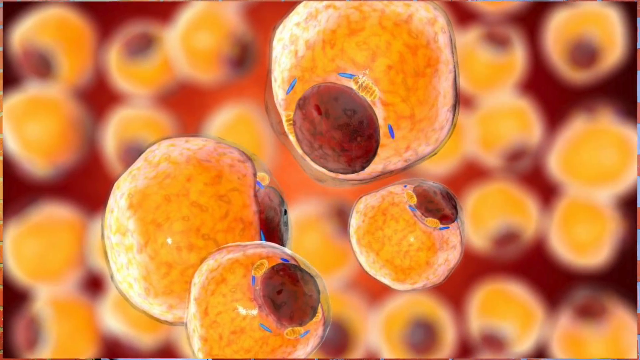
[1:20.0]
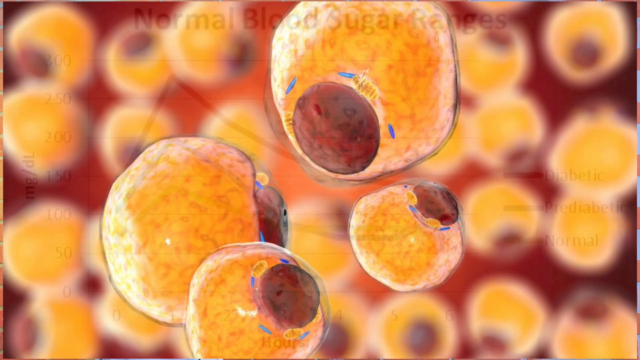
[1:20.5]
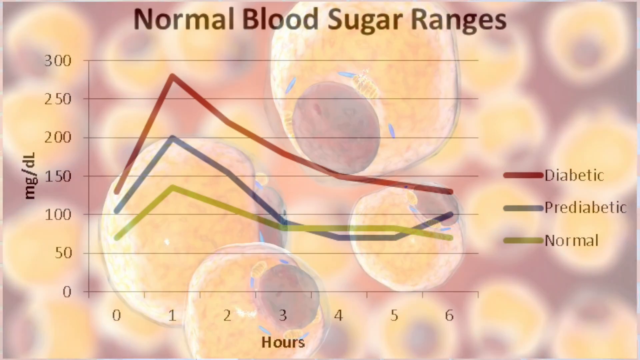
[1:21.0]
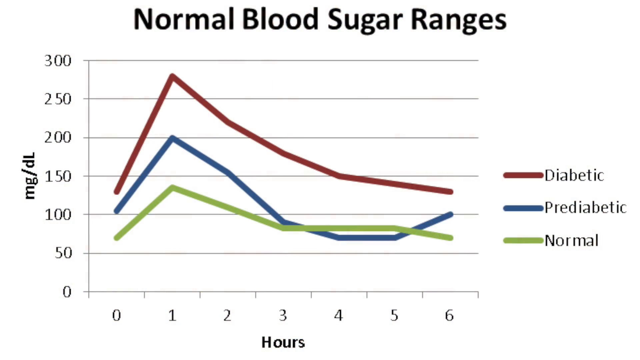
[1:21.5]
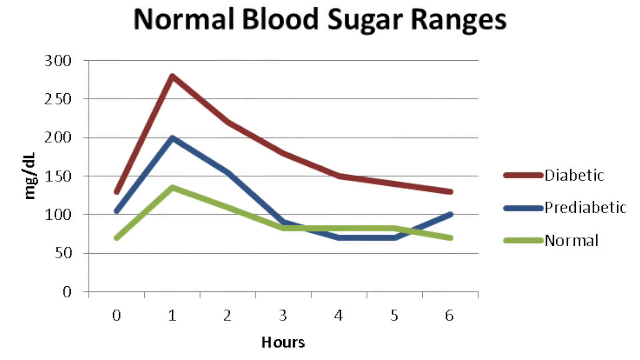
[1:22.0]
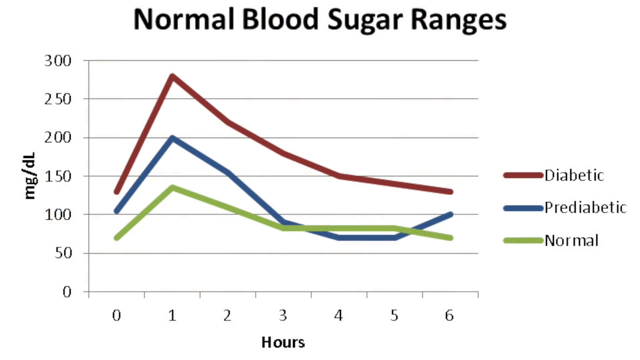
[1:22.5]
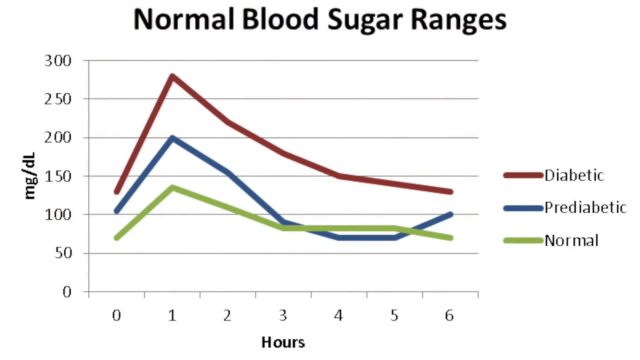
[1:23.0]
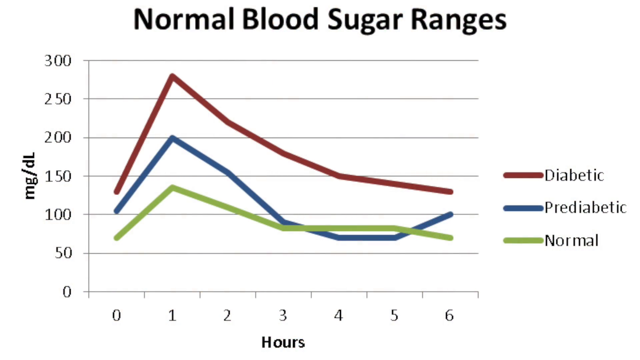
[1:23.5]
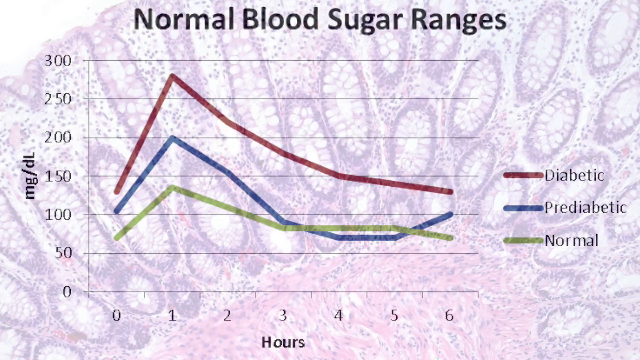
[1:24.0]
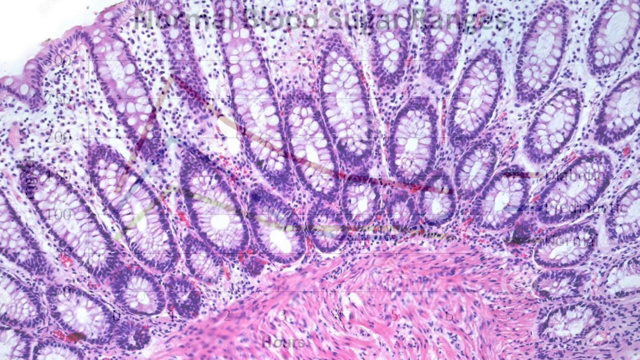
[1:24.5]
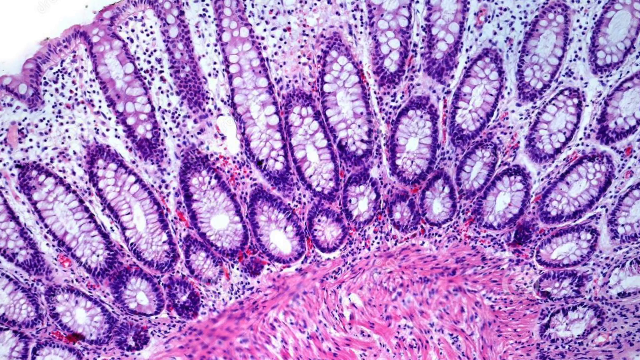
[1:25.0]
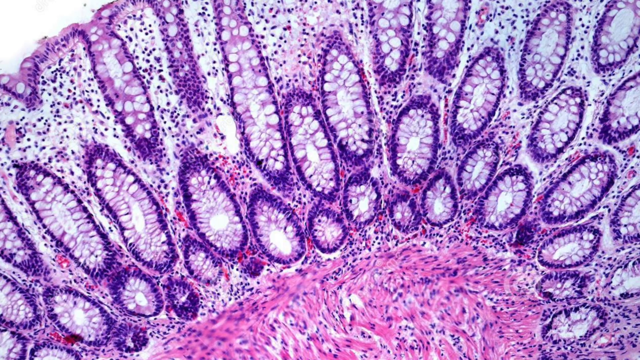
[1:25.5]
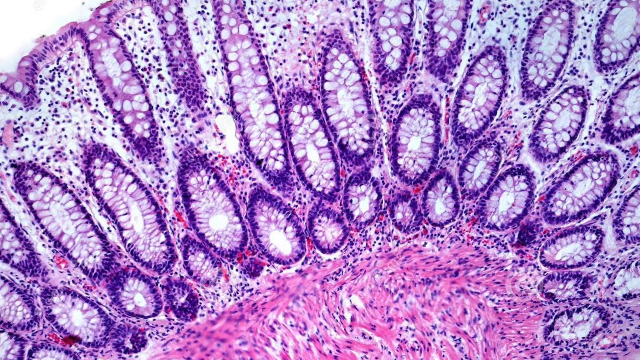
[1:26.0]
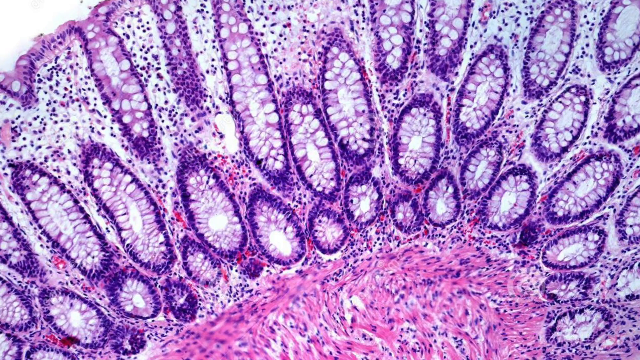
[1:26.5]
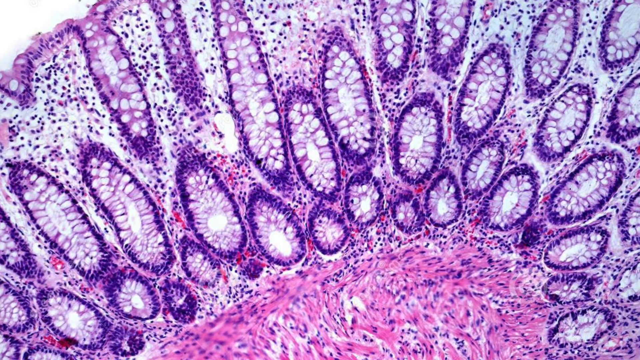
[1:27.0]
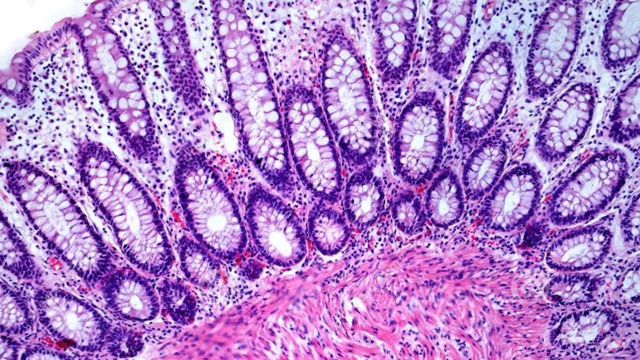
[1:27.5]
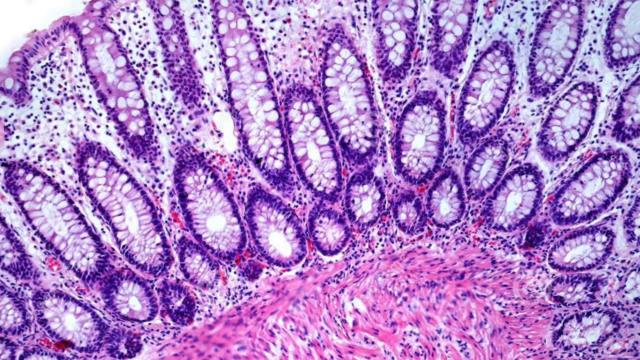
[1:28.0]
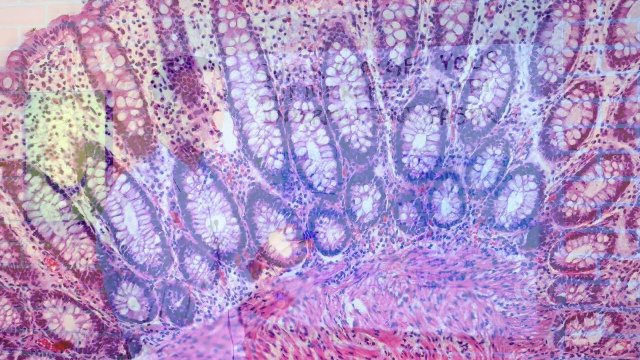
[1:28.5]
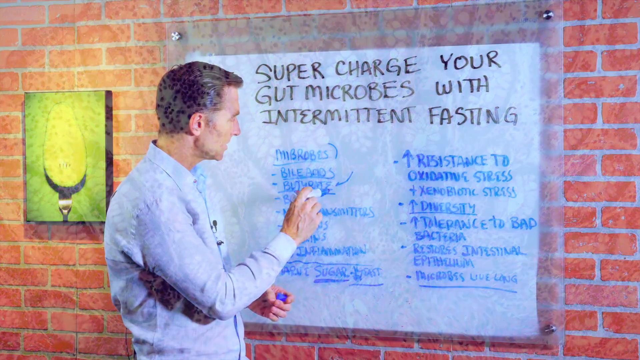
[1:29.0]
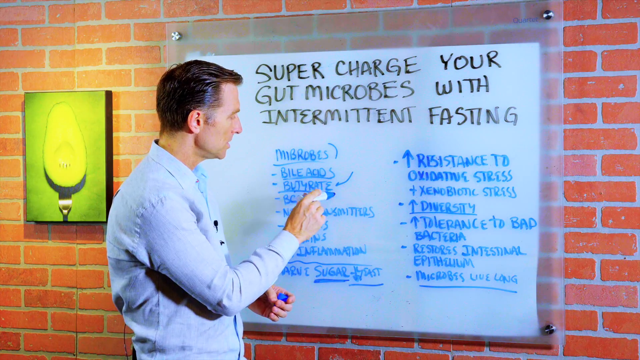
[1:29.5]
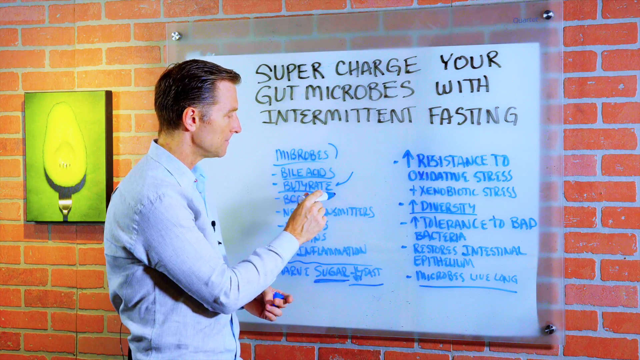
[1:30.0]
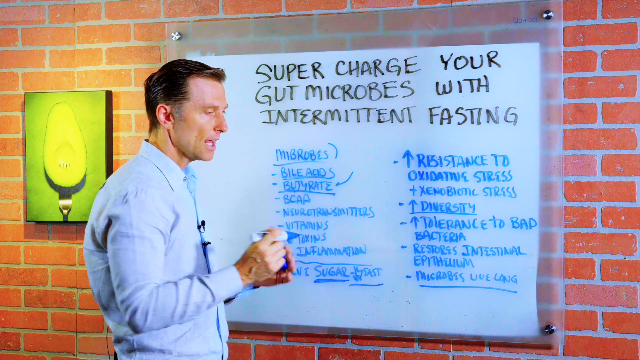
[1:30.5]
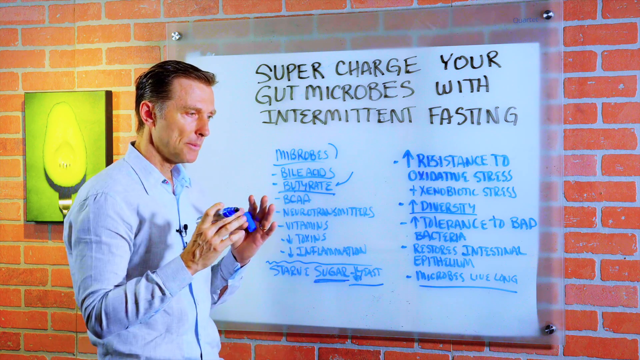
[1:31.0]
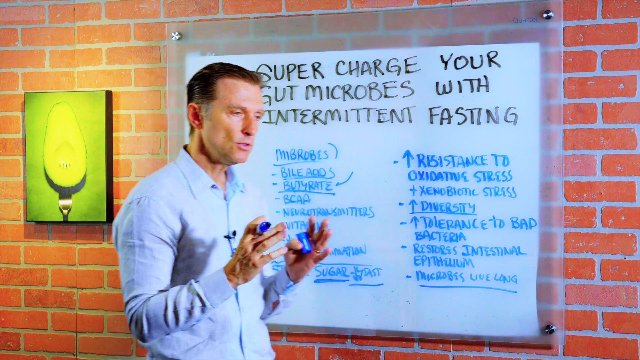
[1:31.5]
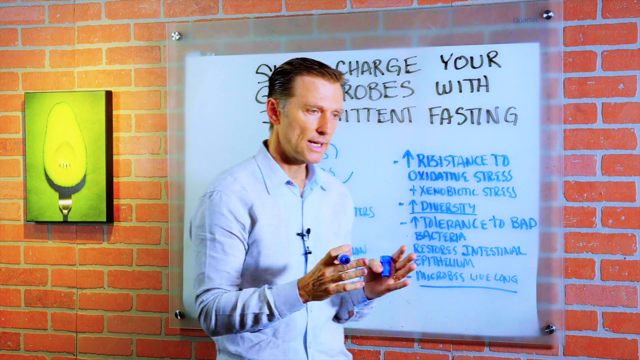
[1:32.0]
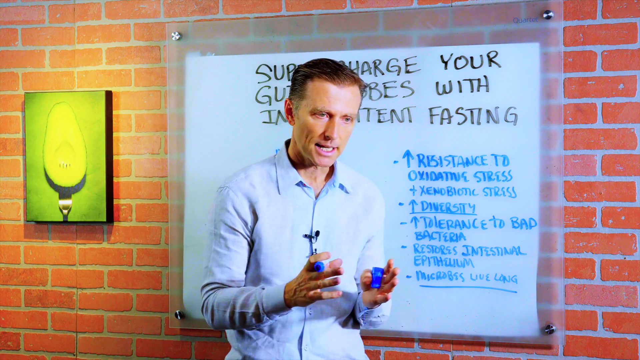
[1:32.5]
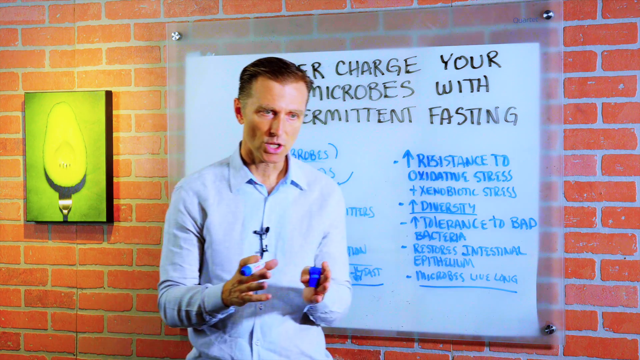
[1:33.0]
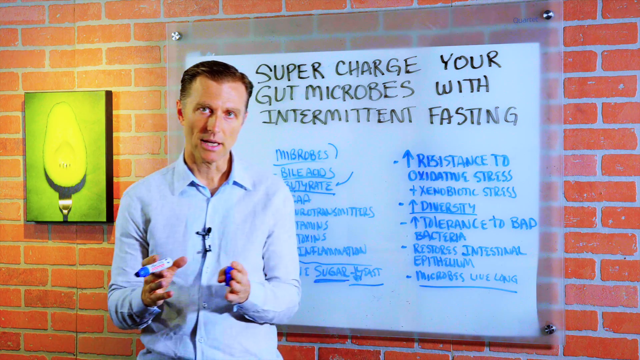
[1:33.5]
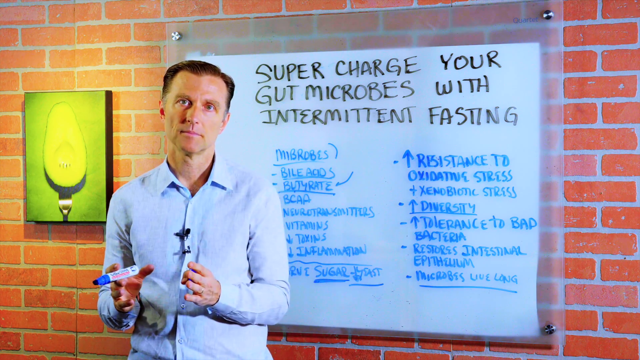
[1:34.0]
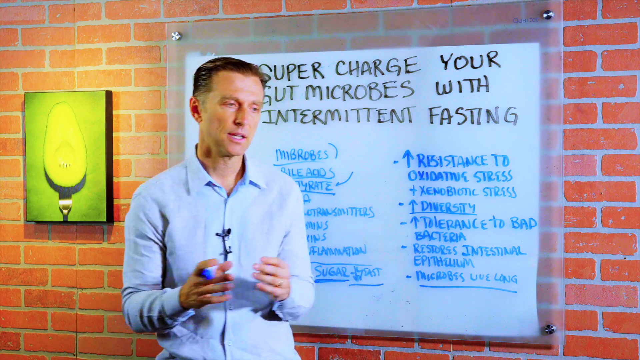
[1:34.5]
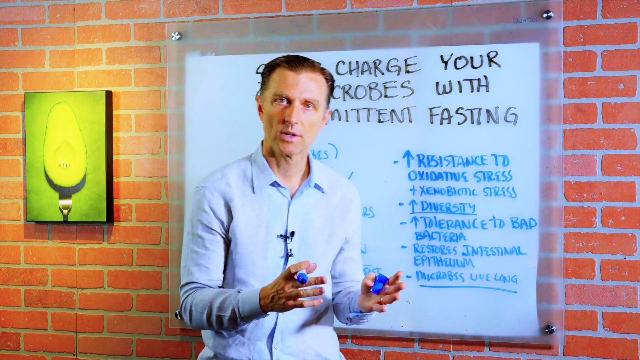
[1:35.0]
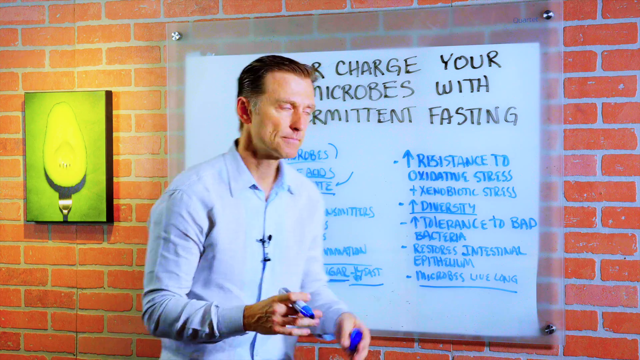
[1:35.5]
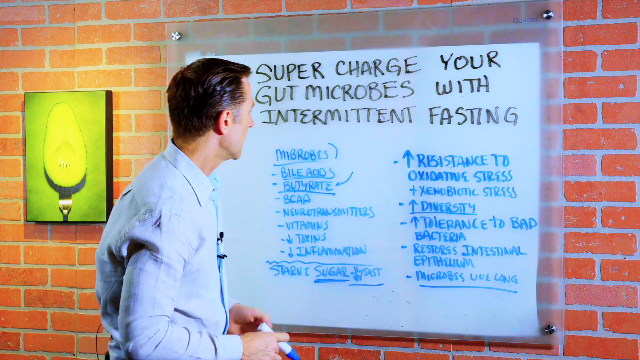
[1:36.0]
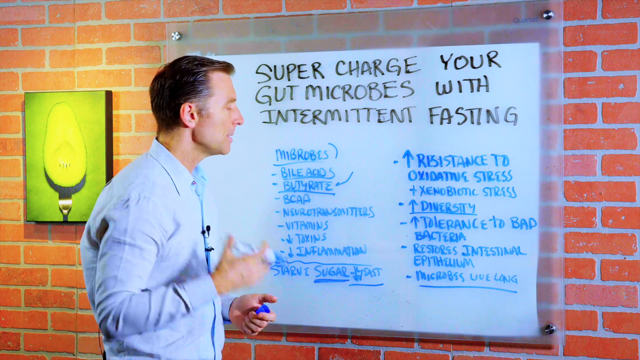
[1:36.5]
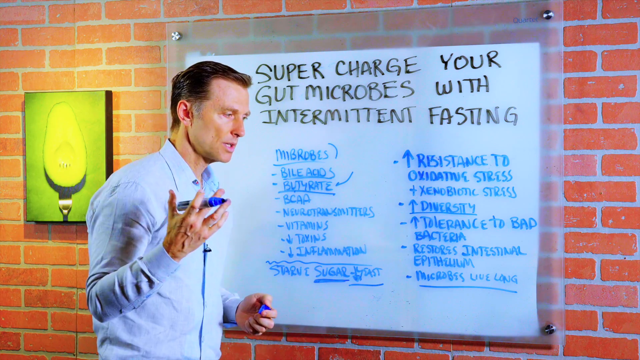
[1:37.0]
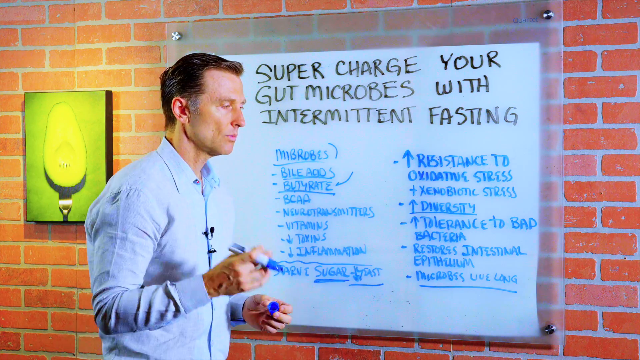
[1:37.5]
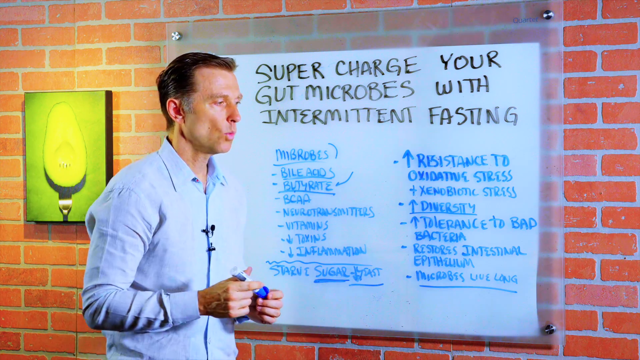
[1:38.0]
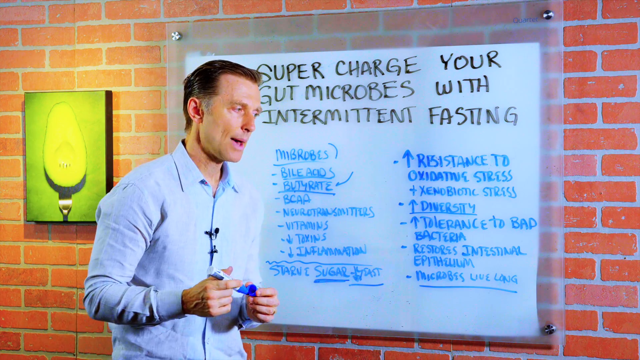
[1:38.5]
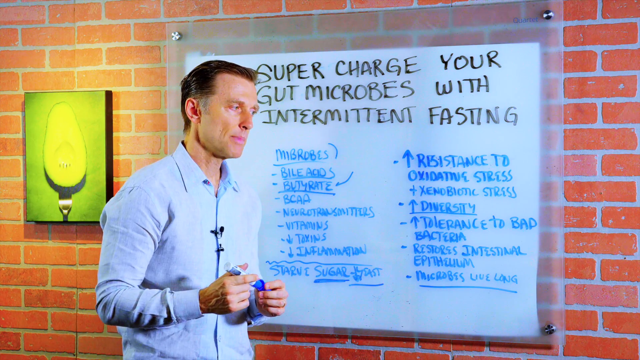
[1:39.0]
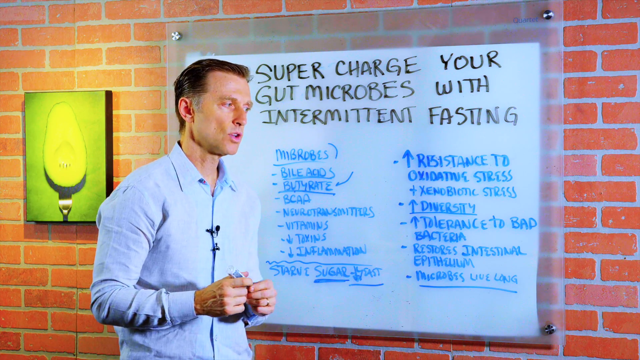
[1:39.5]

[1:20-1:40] A close-up image shows round, yellow microorganisms on a reddish background. Next comes a graph chart with the numbers 0 through 6 on the horizontal axis and 0 through 300 in increments of 50 on the vertical axis. Three lines are plotted: red at the top, blue in the middle, and green at the bottom. A legend on the right side labels the red line "diabetic," the blue line "pre-diabetic," and the green line "normal." Another image follows, looking like a cluster of purple cells. The camera pans closer, and a man with dark hair in a blue shirt speaks in front of a whiteboard with some text on it.